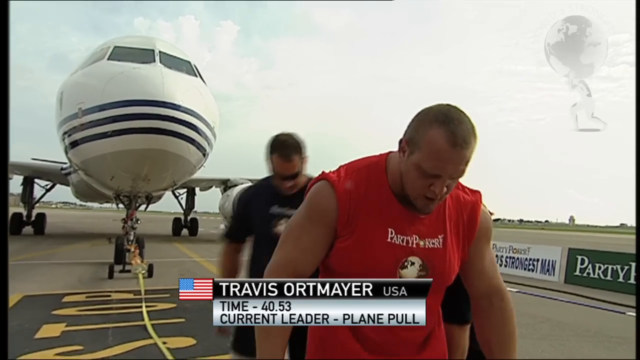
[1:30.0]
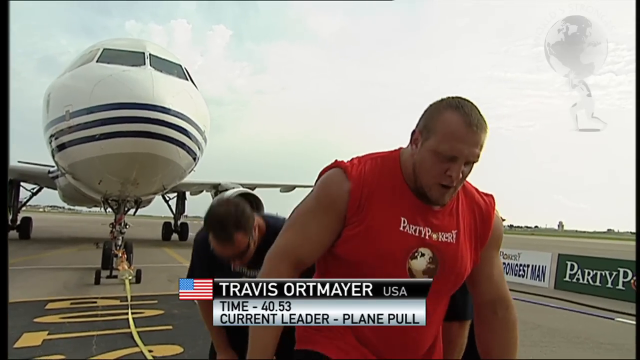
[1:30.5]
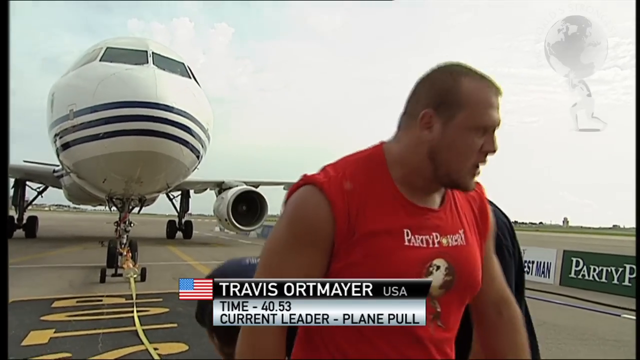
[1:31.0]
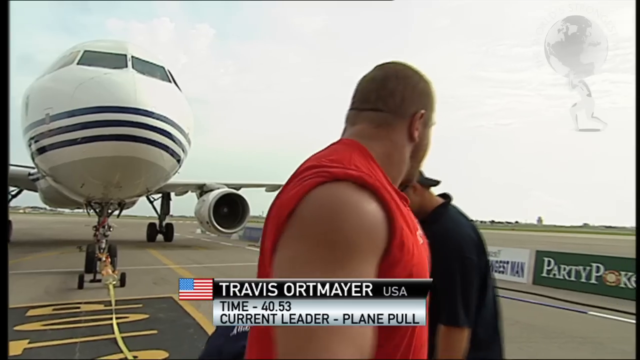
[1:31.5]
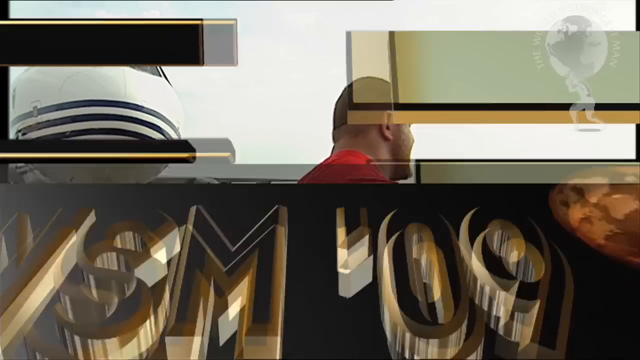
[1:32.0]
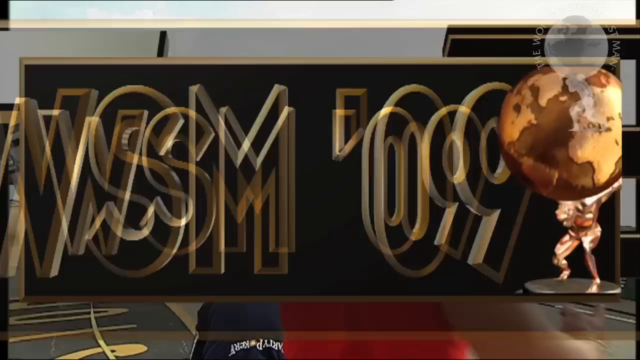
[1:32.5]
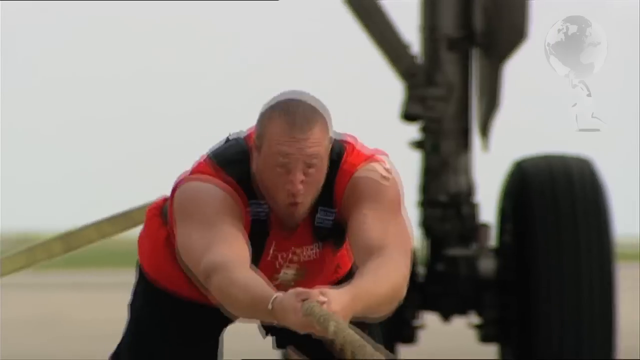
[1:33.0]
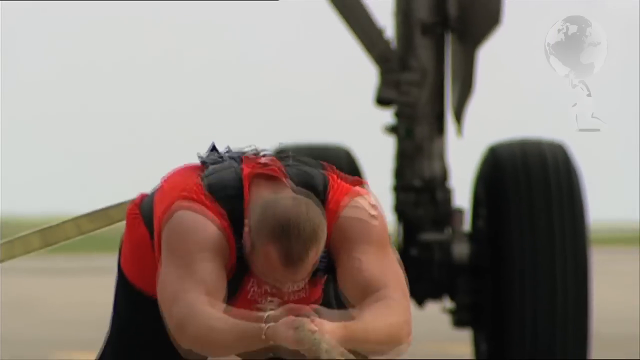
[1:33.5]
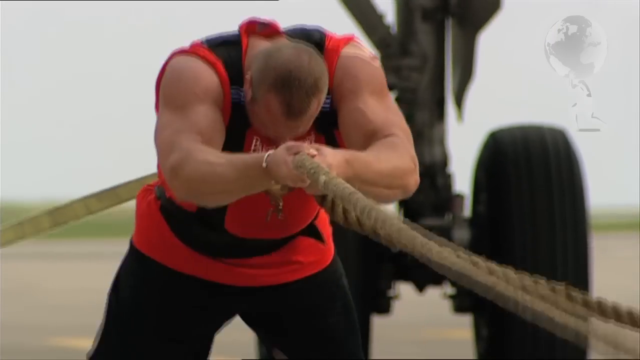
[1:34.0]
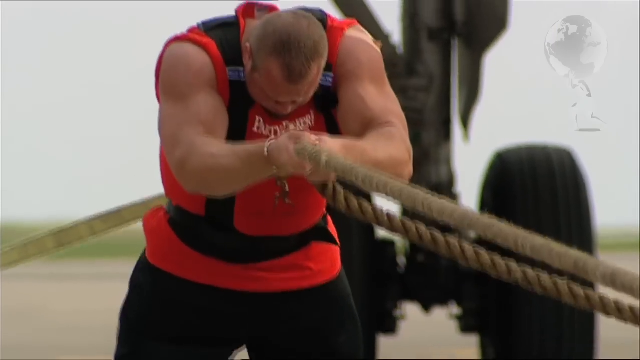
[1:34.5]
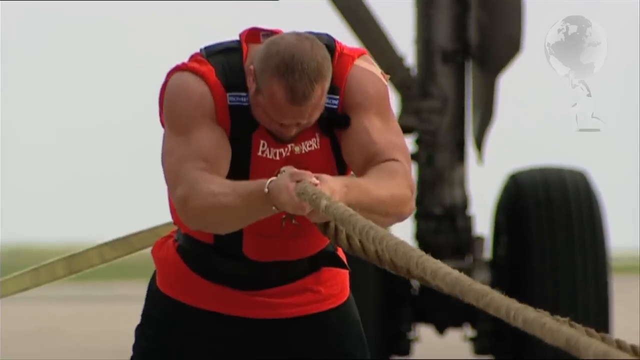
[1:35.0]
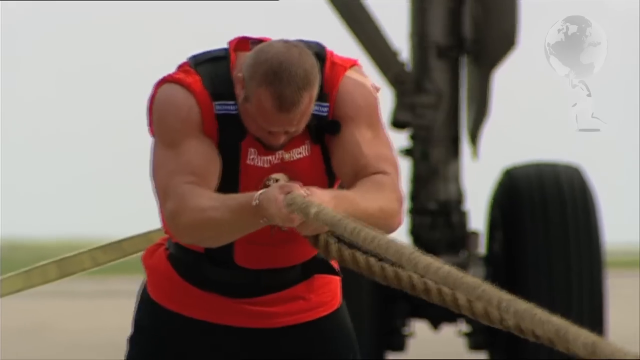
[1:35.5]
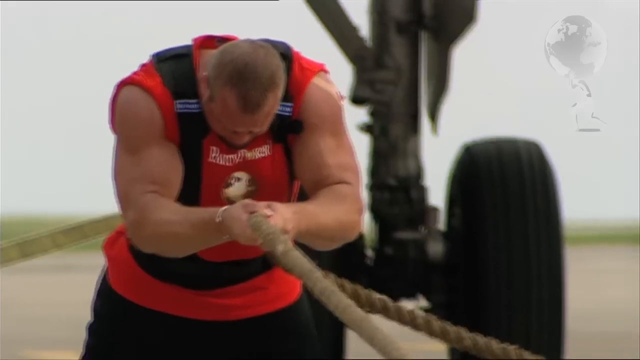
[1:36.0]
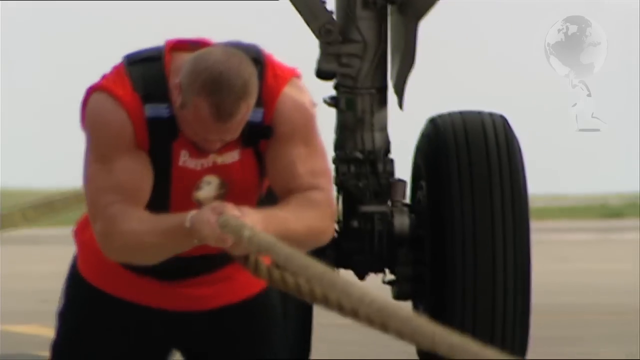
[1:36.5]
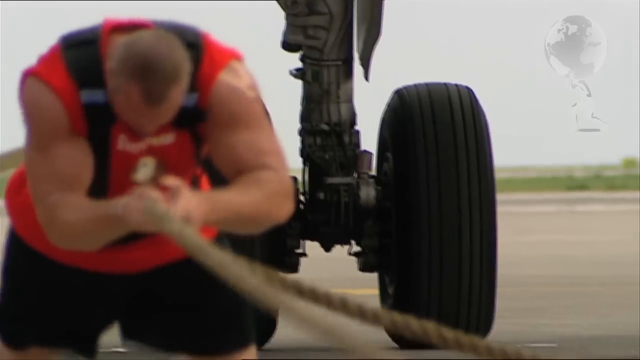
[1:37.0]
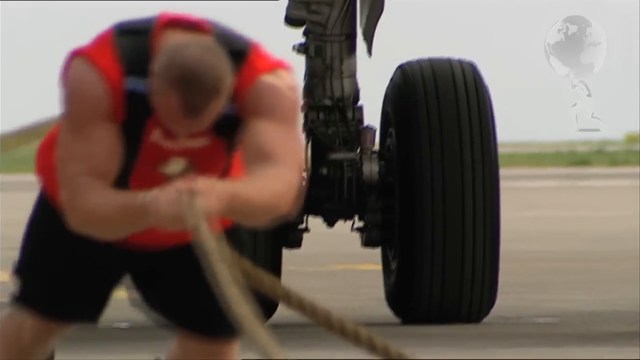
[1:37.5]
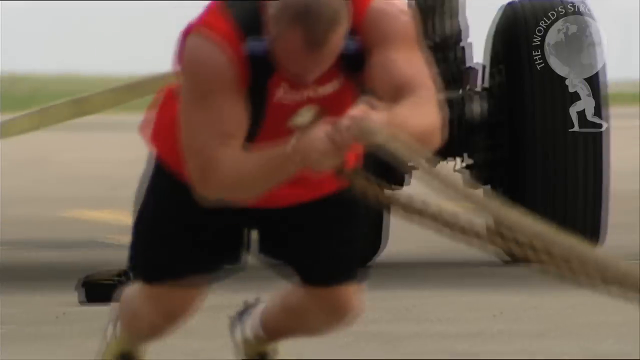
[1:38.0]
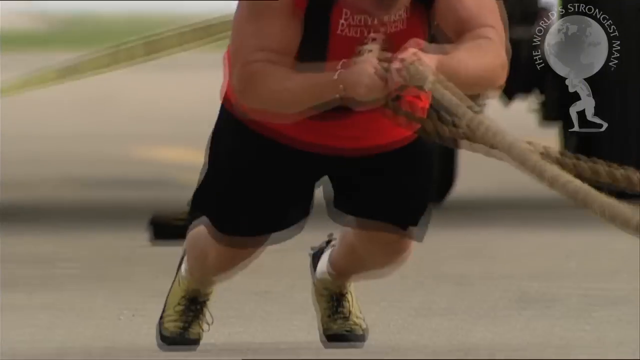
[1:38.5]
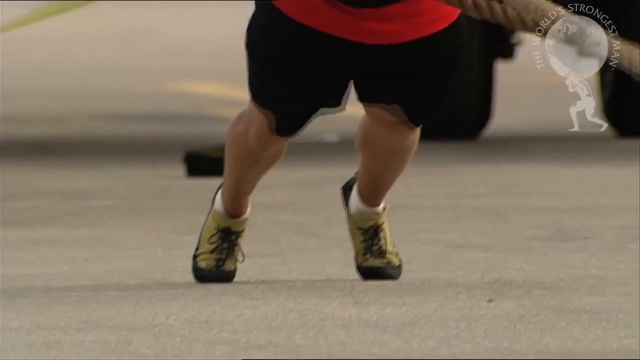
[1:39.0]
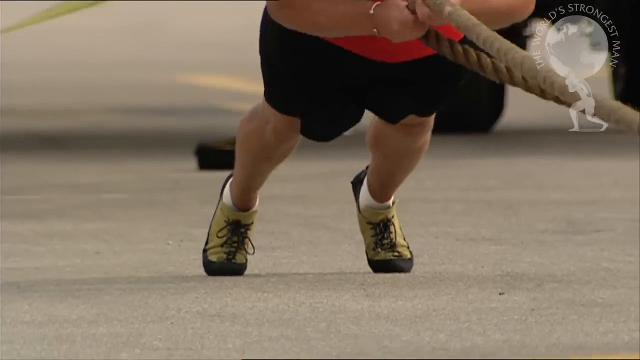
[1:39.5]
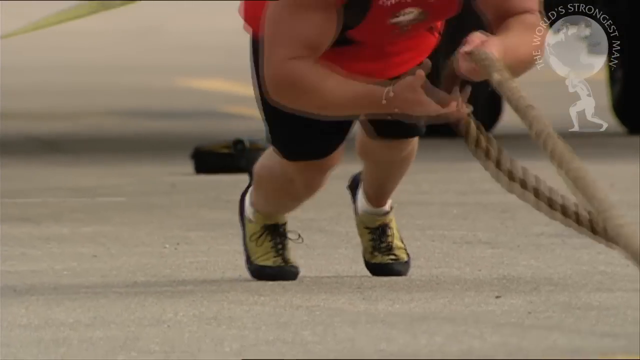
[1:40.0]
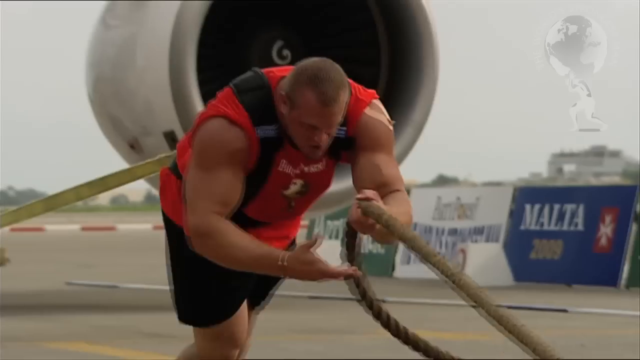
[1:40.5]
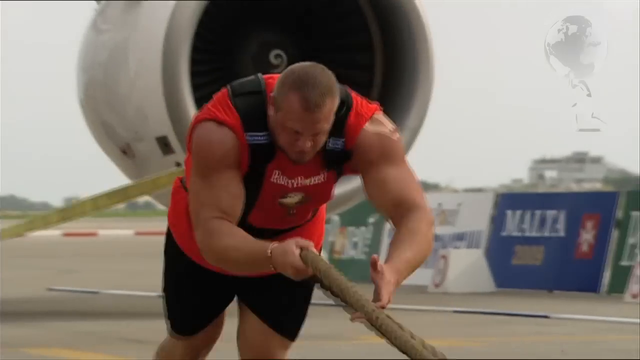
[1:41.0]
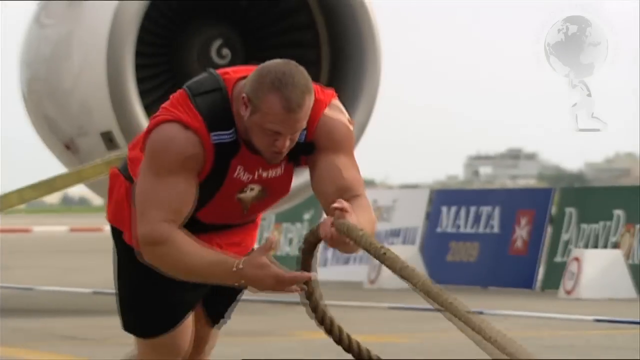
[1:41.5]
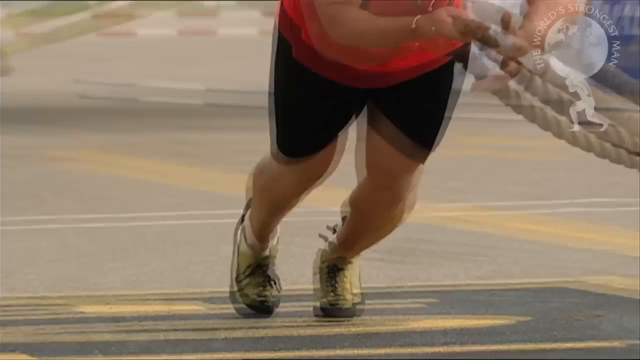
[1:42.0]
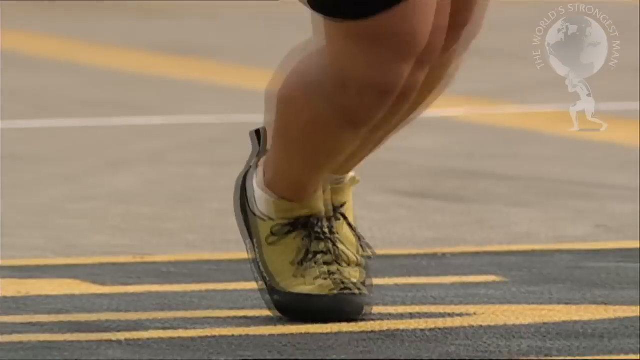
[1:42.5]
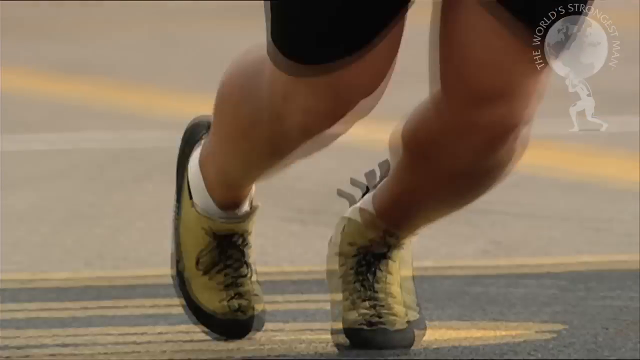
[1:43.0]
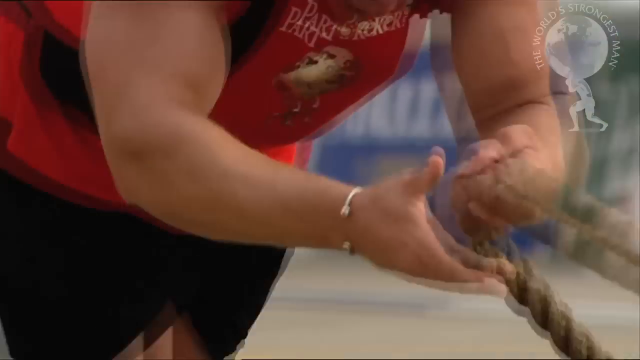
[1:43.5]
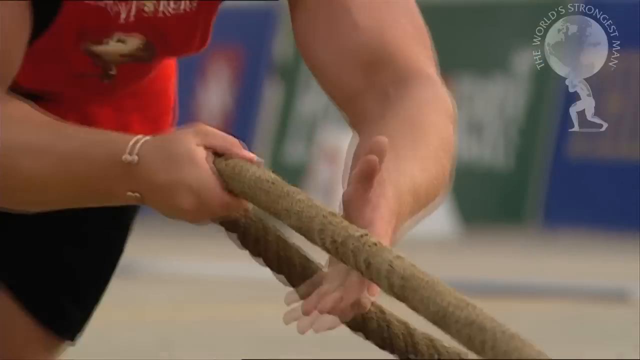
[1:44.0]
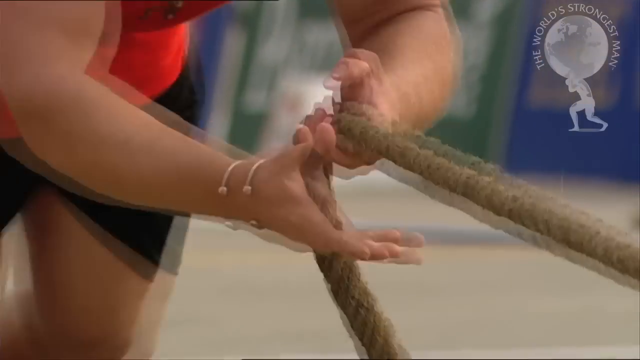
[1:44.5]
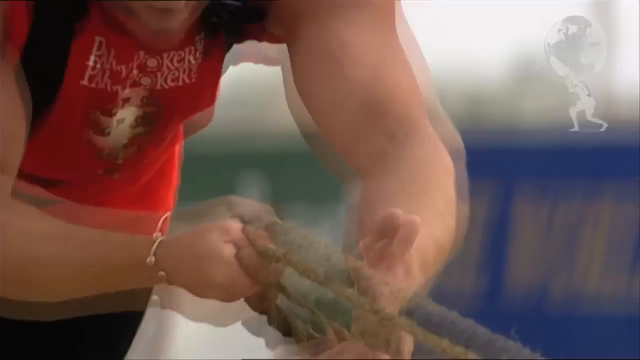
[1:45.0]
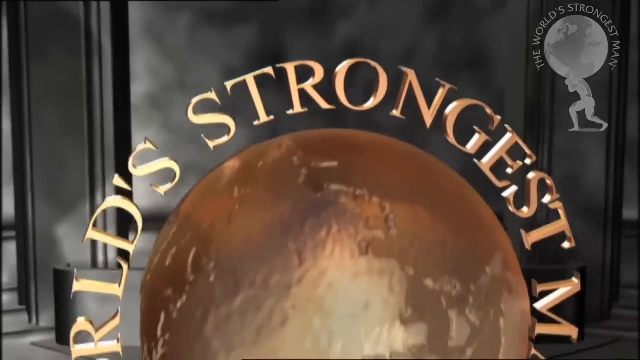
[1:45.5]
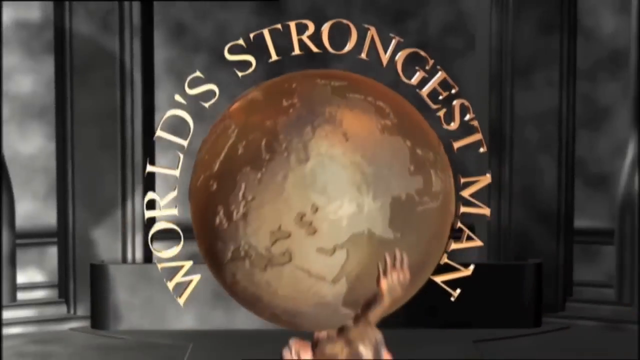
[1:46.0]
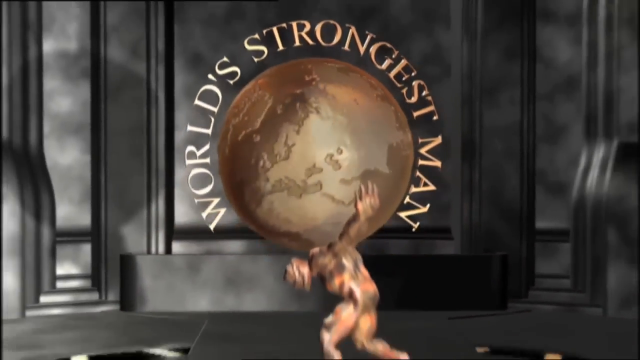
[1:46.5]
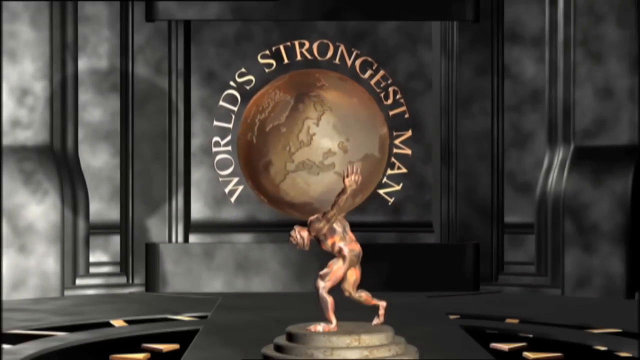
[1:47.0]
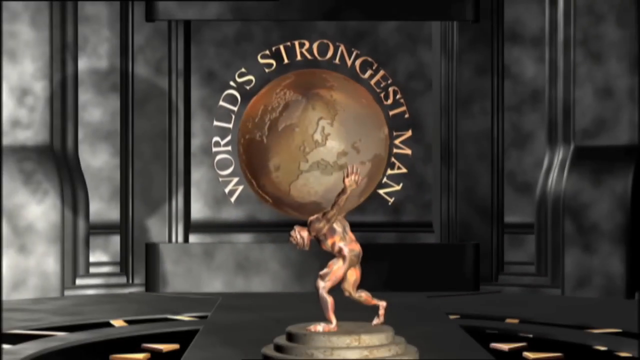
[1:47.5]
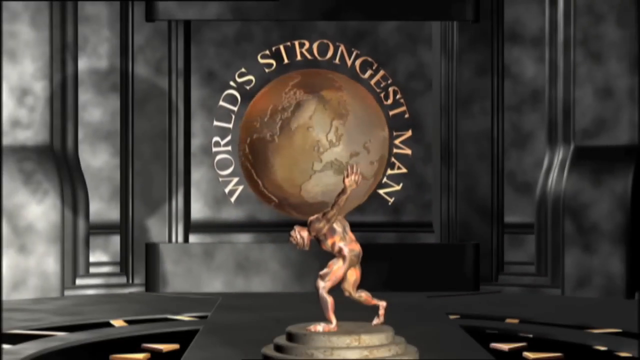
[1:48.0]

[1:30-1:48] Travis Ortmayer, a large, muscular man in a red shirt and black shorts, has just finished the Plane Pull event of the World's Strongest Man competition. A worker removes the harness from him, and the airplane it was attached to can still be seen behind him. He pulled the 44-ton airplane 15 meters in 40.53 seconds, beating the previous fastest time of about 41 seconds and becoming the current leader. Ortmayer looks out of breath and tired but smiles. The video cuts to a logo reading "WSM09" with the strongman lifting the world, then to a replay of Ortmayer pulling the airplane, with a close-up of him steadying himself with the ropes, moving forward gradually, and the plane traveling behind him. It then cuts to the World's Strongest Man logo, and the video ends.